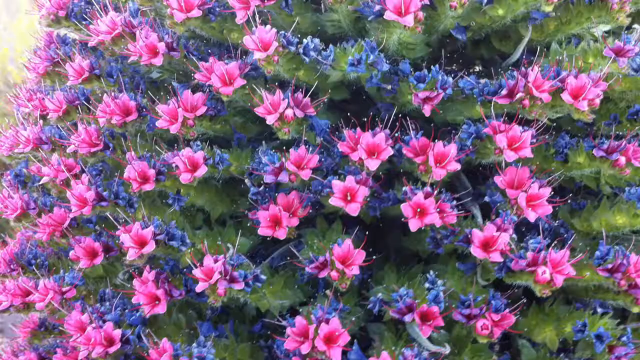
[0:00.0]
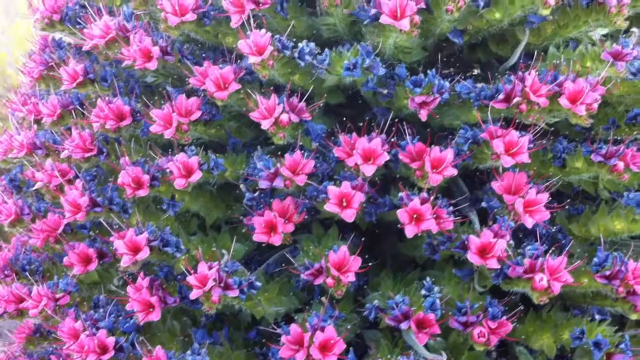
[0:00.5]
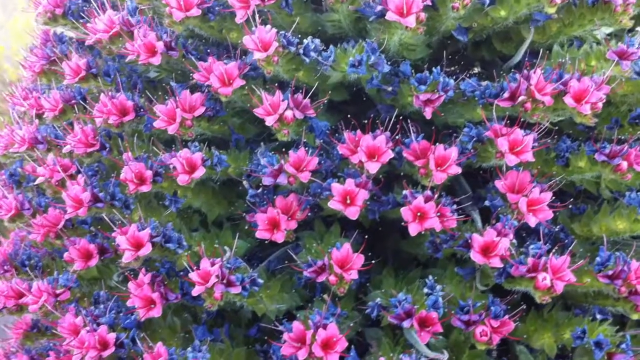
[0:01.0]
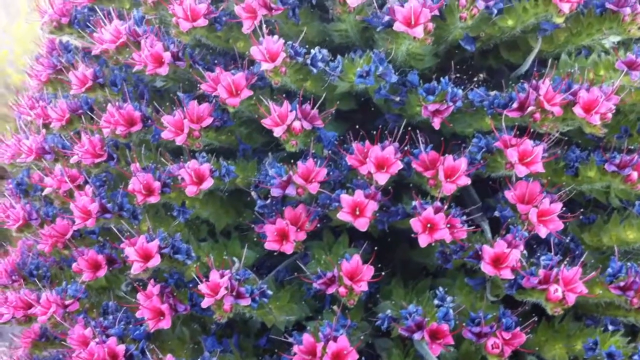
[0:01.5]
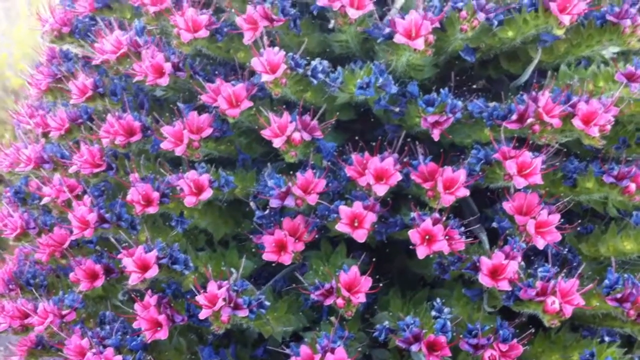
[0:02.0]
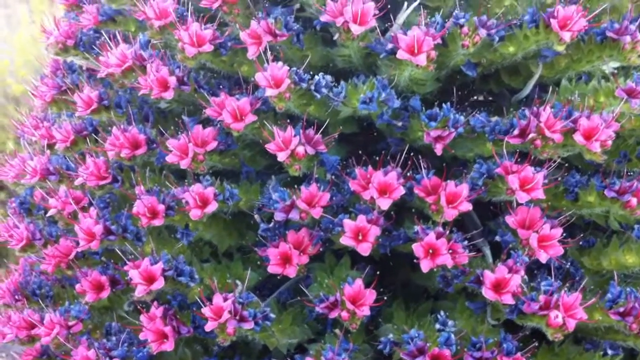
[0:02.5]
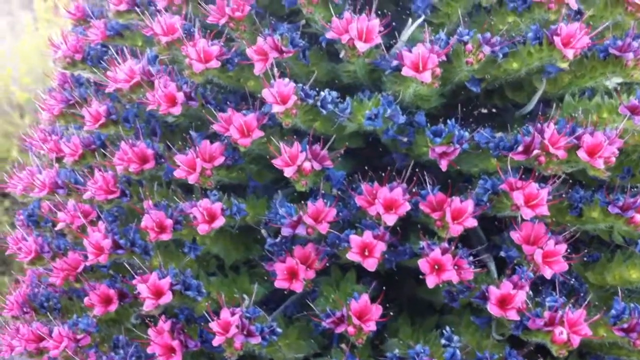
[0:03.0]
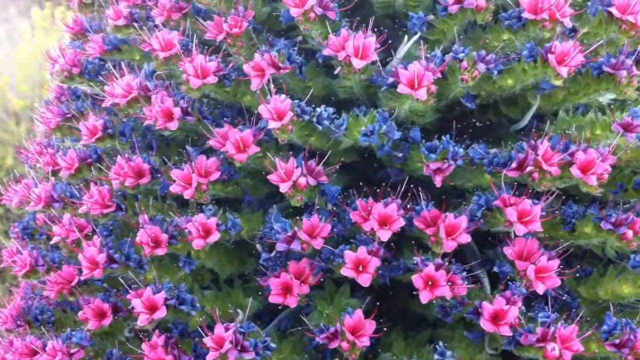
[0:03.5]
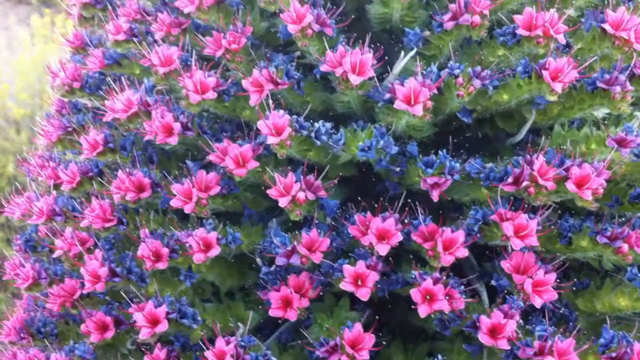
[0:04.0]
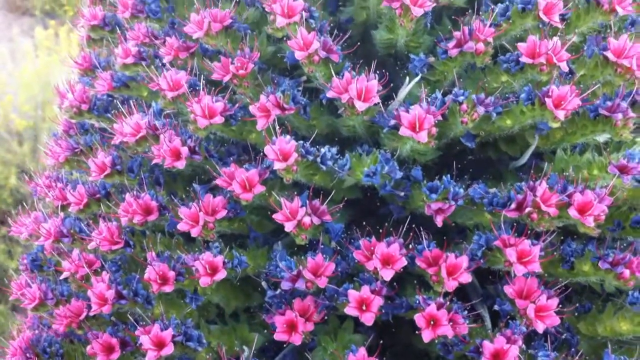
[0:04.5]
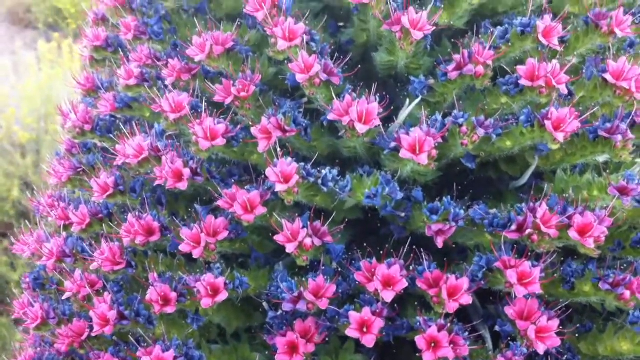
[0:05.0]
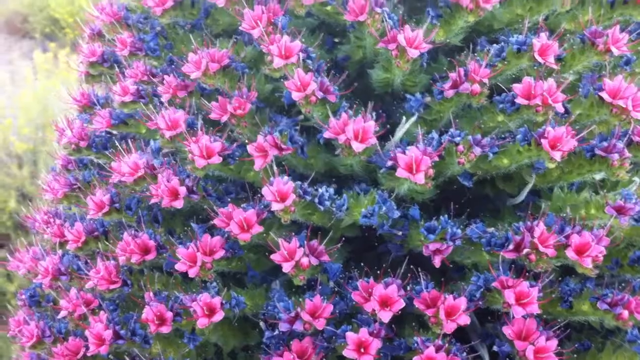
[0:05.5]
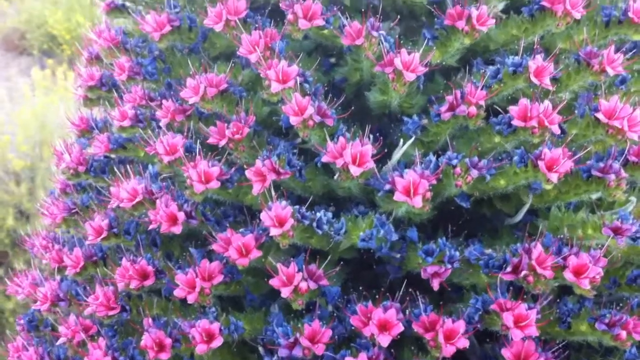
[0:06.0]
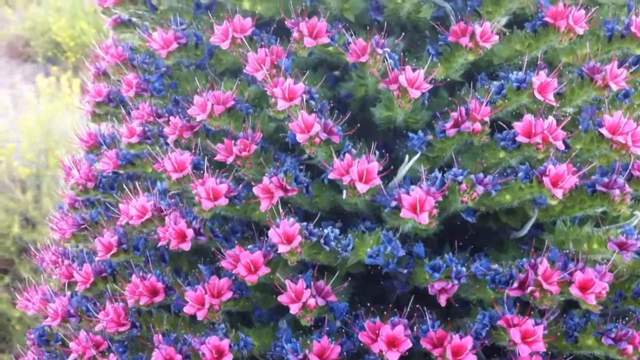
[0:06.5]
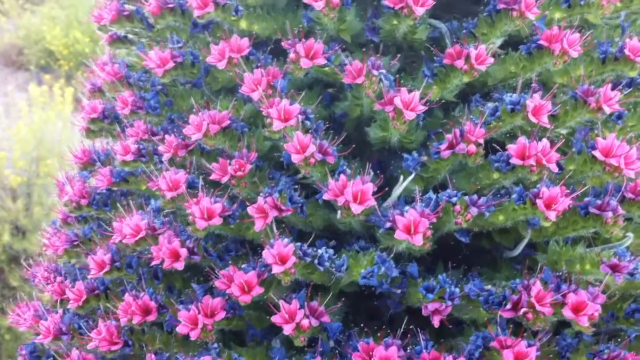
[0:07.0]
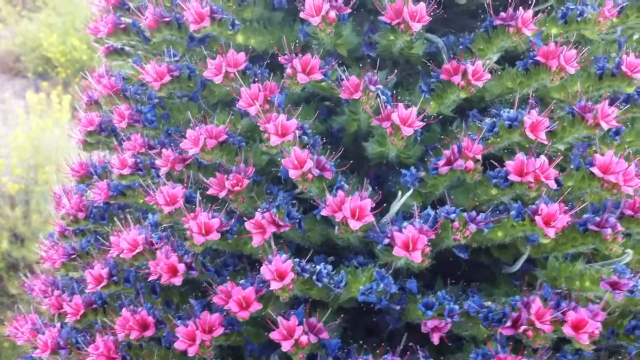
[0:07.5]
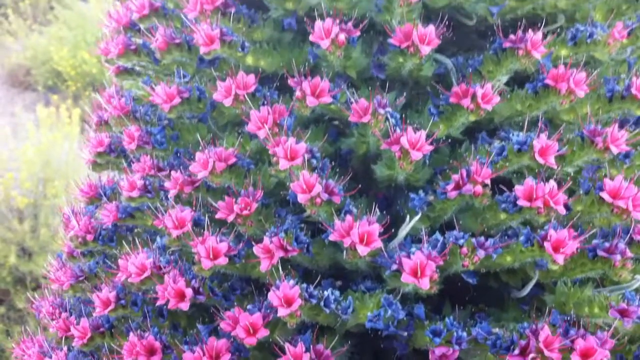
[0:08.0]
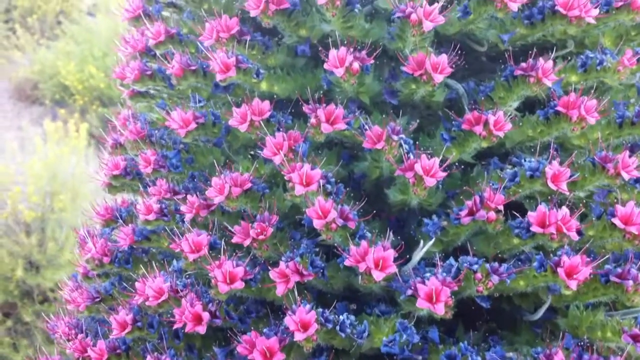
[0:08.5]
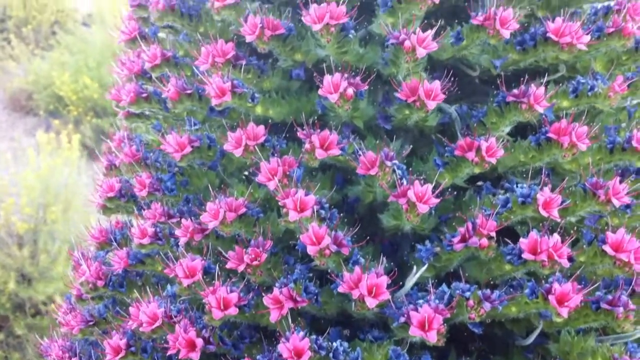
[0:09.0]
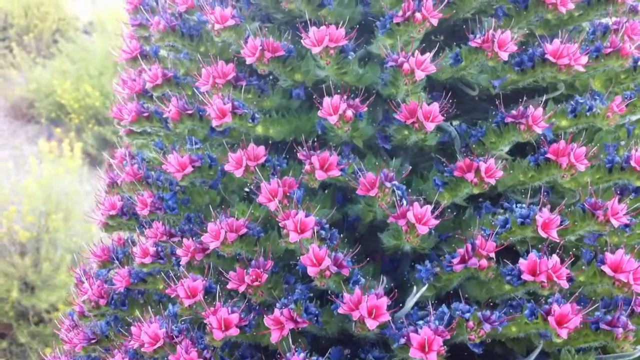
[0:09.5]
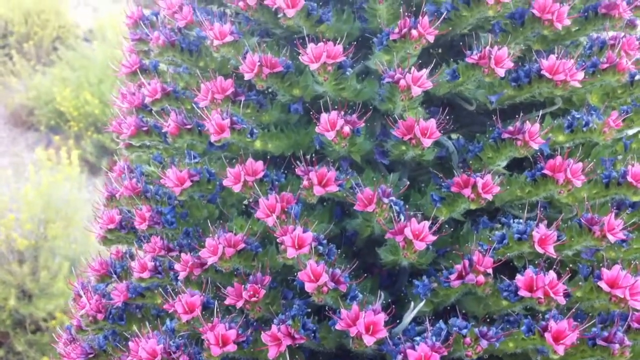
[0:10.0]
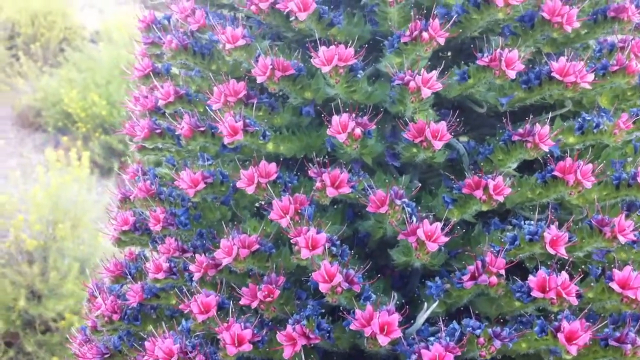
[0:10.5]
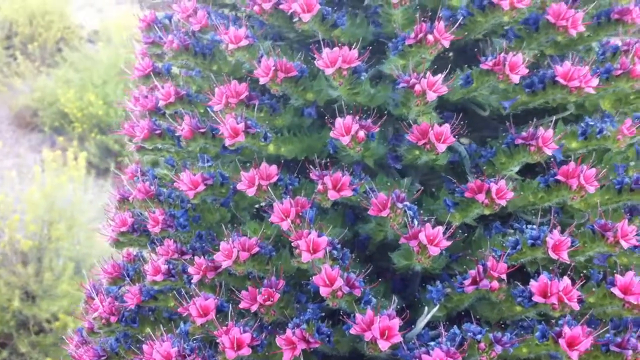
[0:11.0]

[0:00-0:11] Someone's garden area has a large green plant in bloom. The blooms are flowers in different colors of pink and purple, and also blue. Because some of the flowers are pink and some are blue, it looks like there might be two different species of plants growing here, budding these flowers. It is a large, healthy, green, flowering bush. The pink and purplish flowers are semi-large and opened up, with a deep purple center and a yellow pistil coming out of the center of each flower. The plant looks lush and healthy.